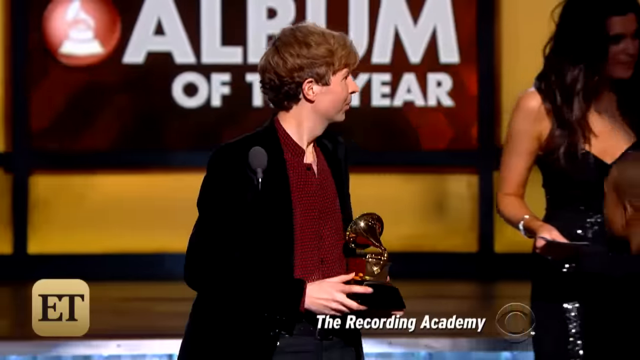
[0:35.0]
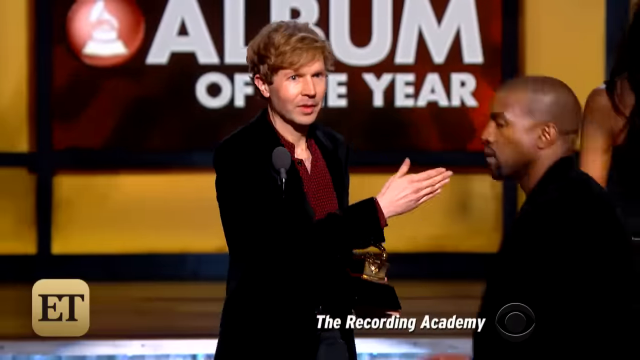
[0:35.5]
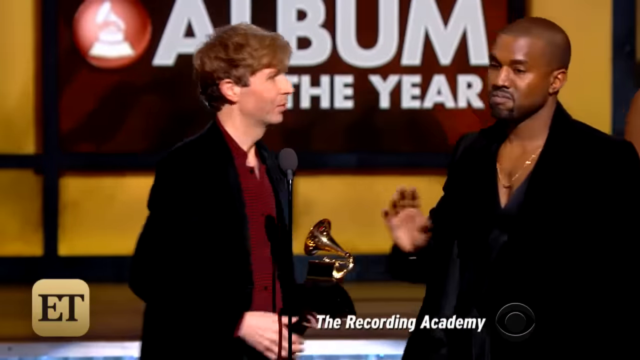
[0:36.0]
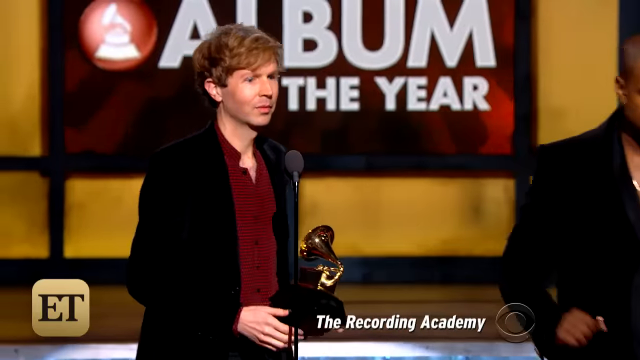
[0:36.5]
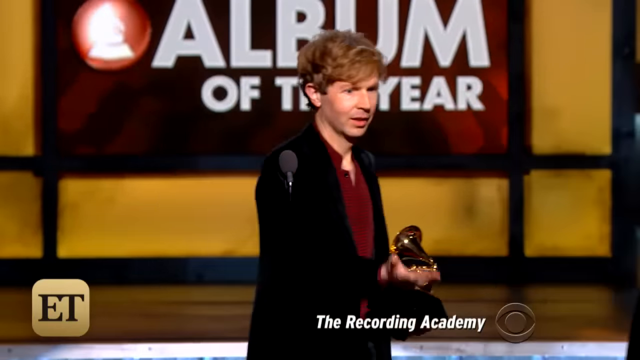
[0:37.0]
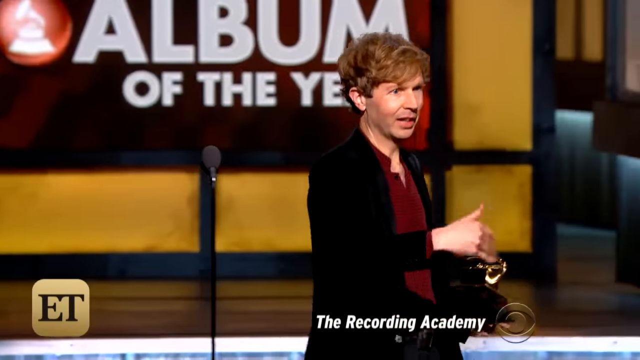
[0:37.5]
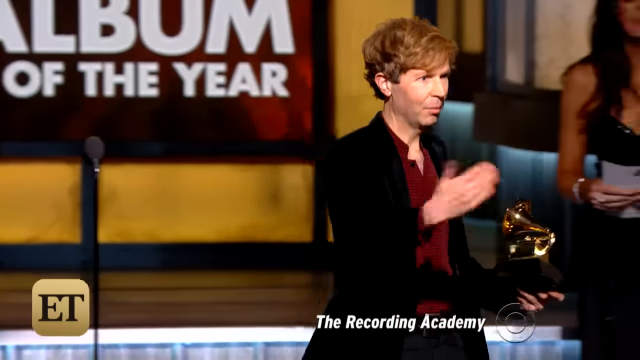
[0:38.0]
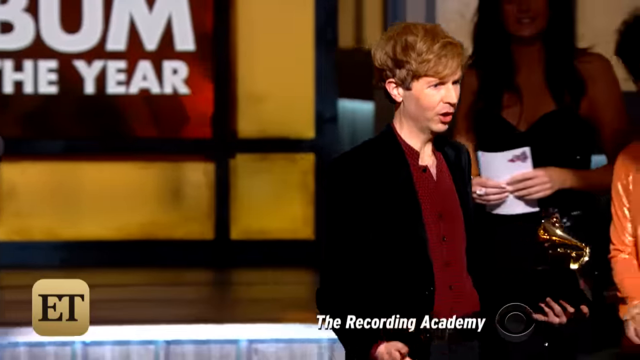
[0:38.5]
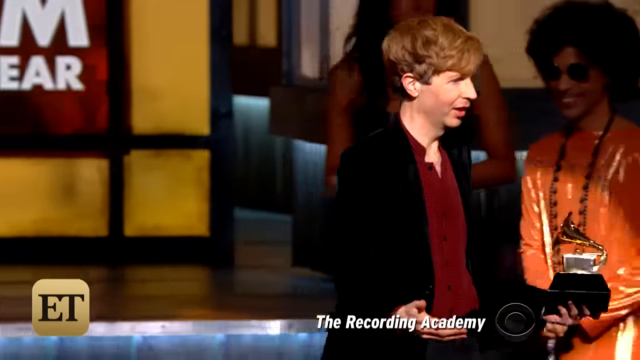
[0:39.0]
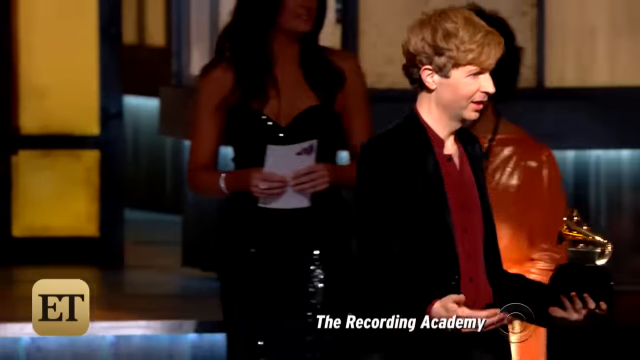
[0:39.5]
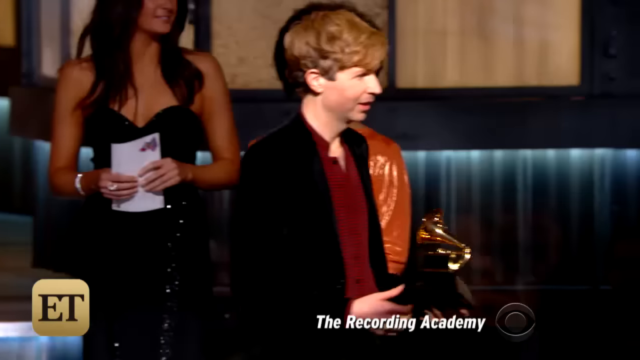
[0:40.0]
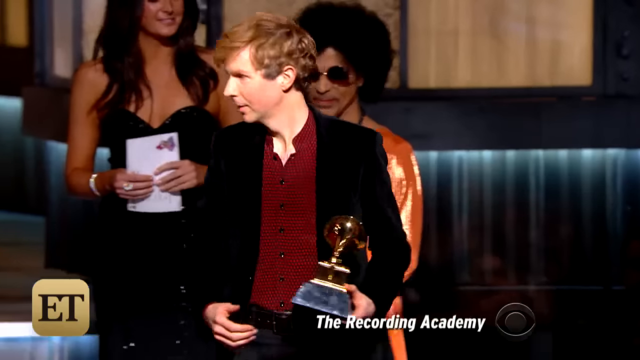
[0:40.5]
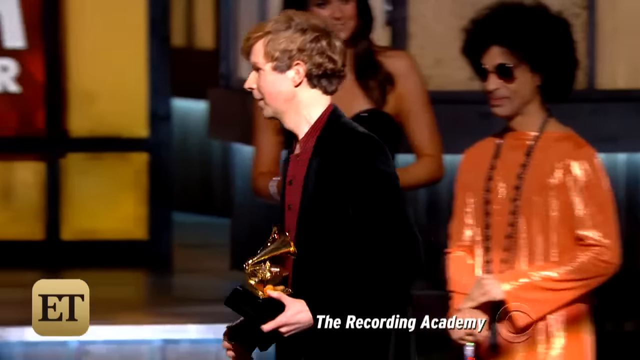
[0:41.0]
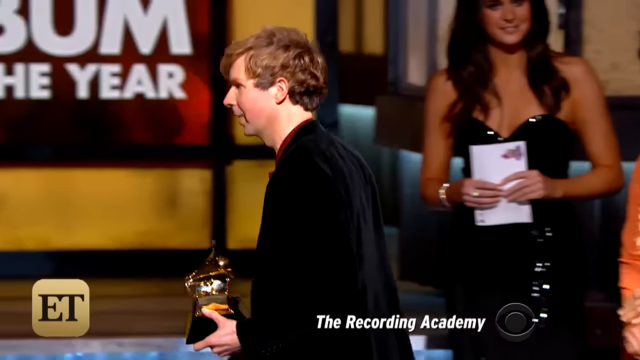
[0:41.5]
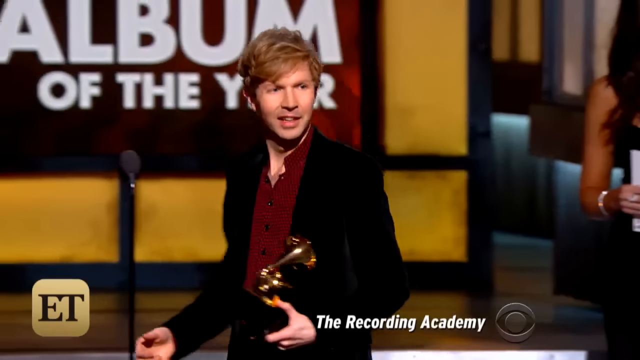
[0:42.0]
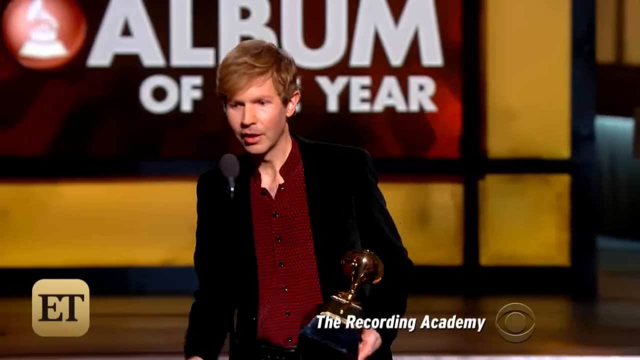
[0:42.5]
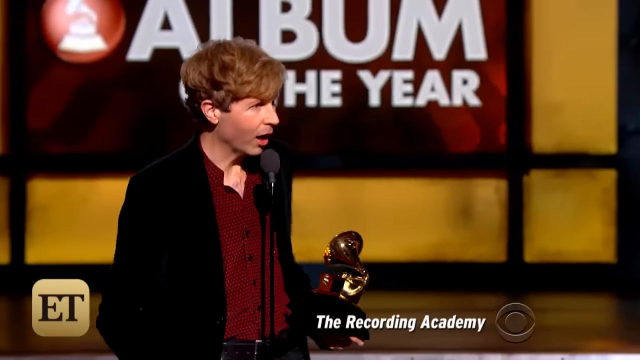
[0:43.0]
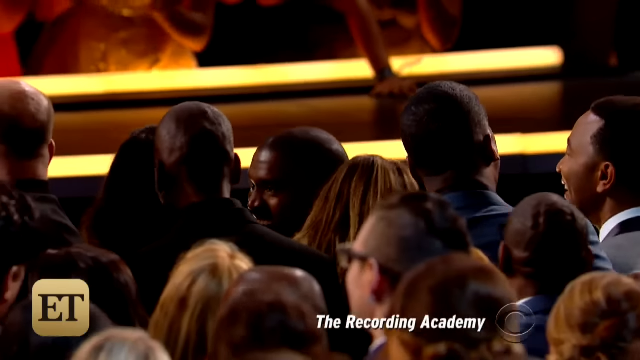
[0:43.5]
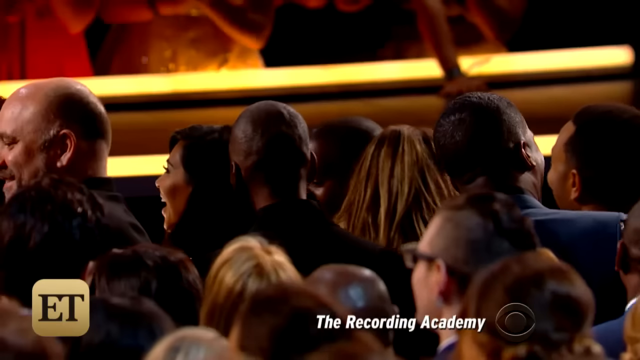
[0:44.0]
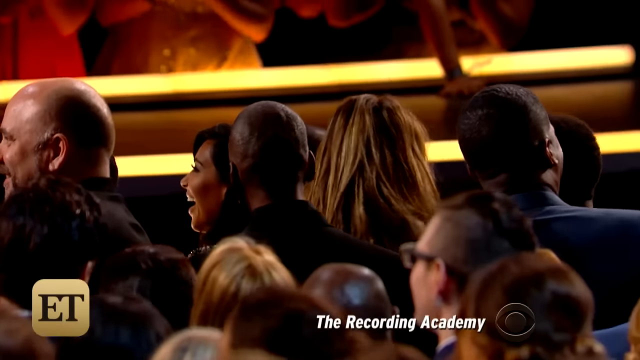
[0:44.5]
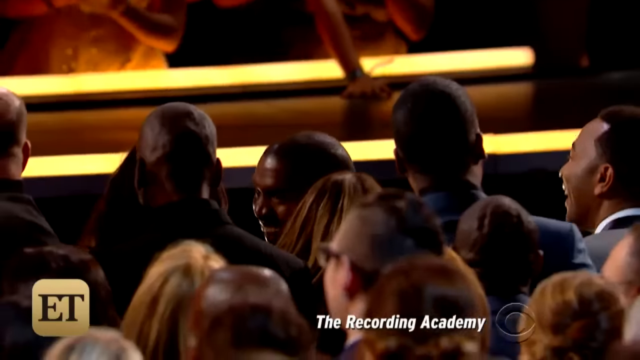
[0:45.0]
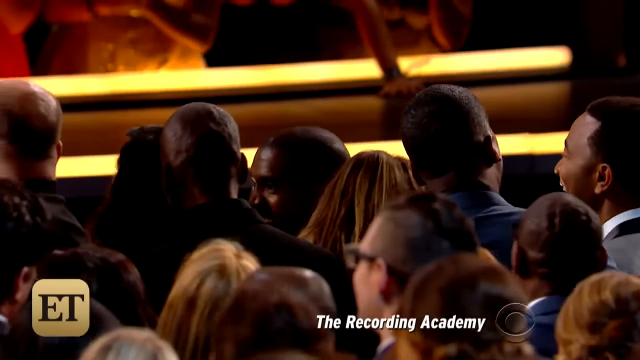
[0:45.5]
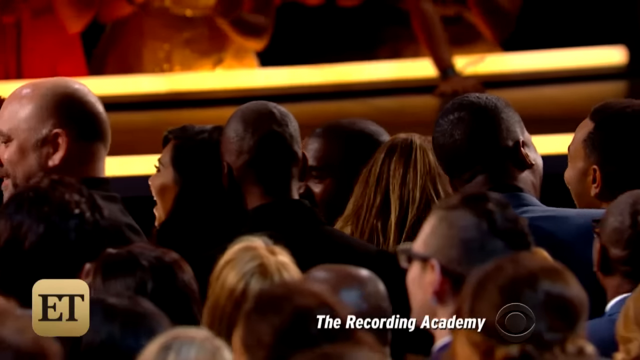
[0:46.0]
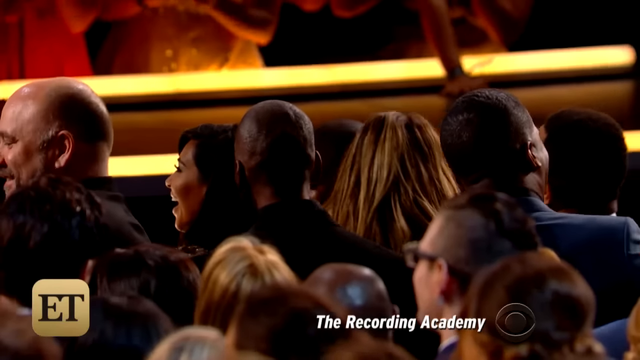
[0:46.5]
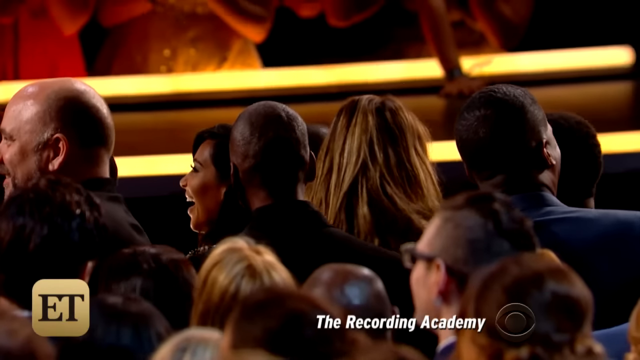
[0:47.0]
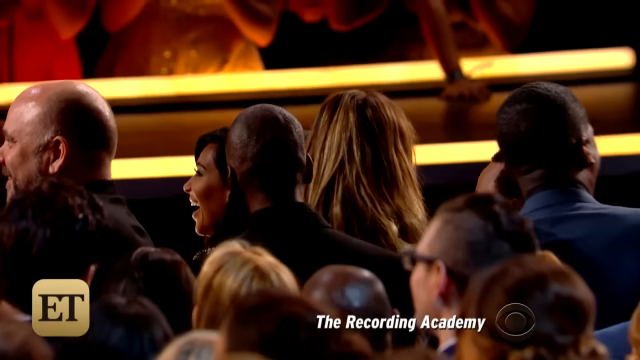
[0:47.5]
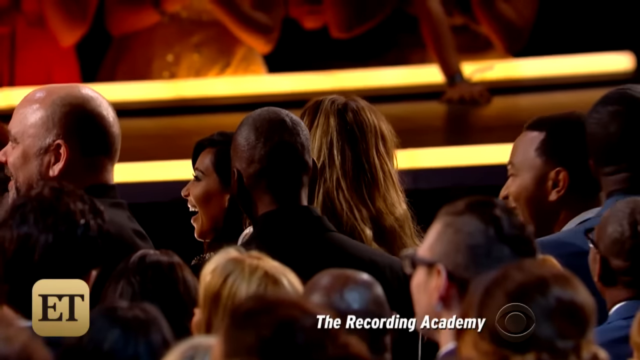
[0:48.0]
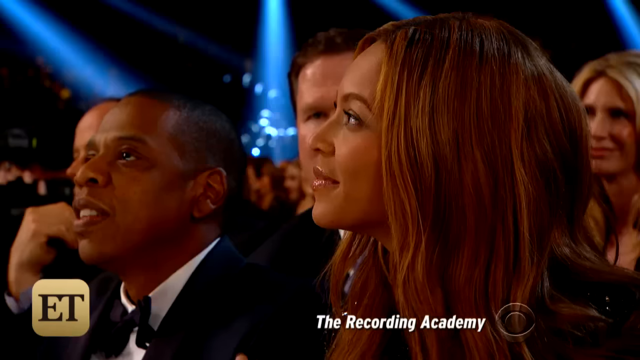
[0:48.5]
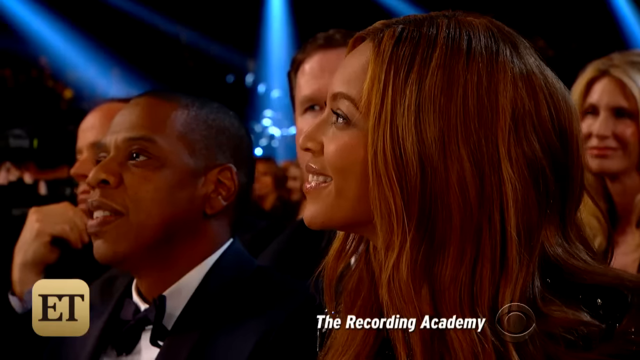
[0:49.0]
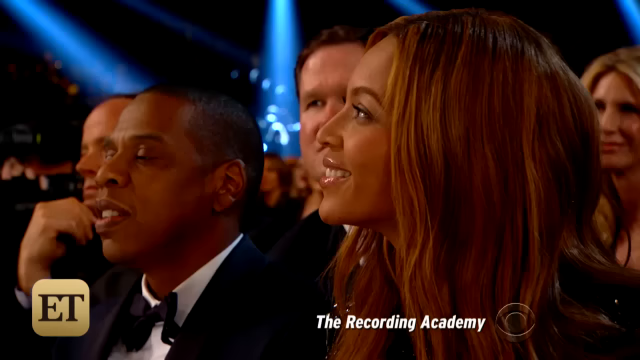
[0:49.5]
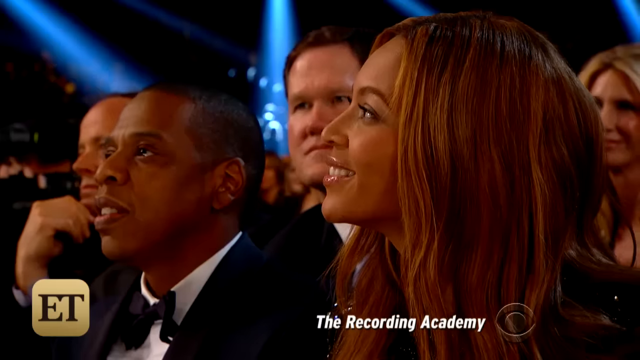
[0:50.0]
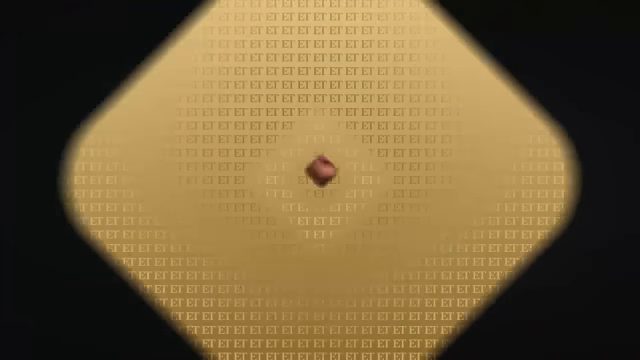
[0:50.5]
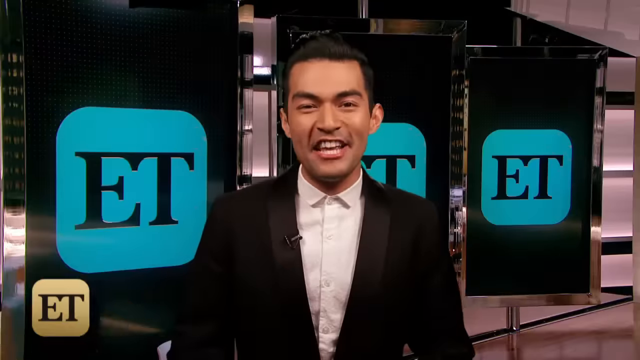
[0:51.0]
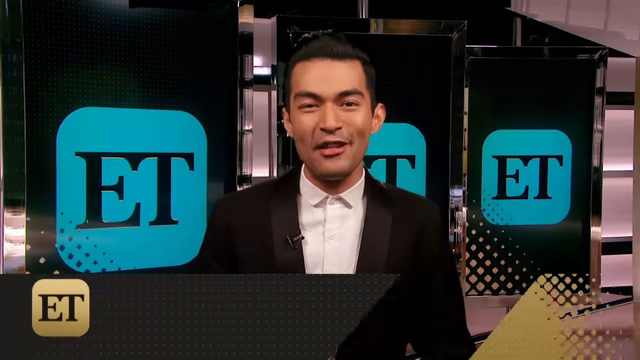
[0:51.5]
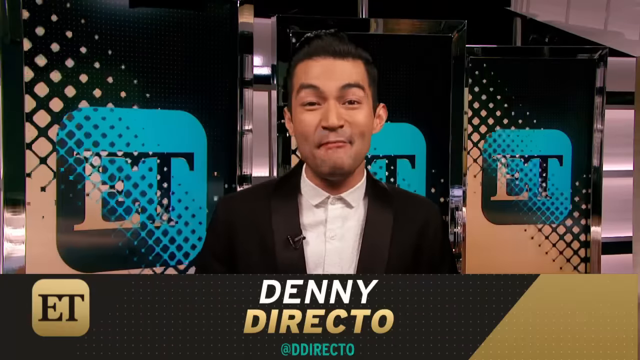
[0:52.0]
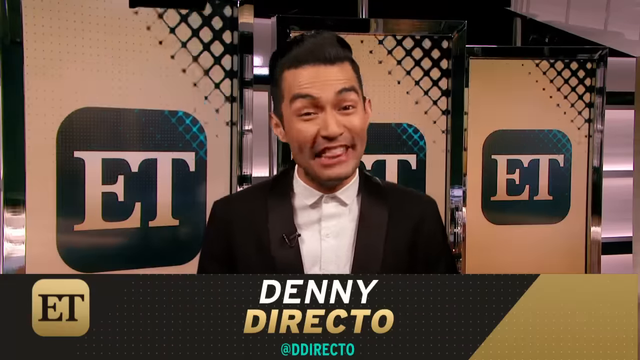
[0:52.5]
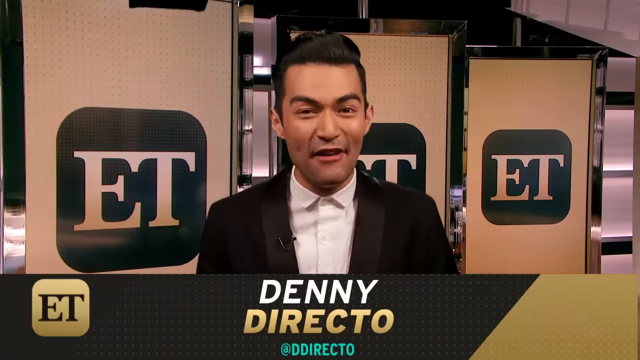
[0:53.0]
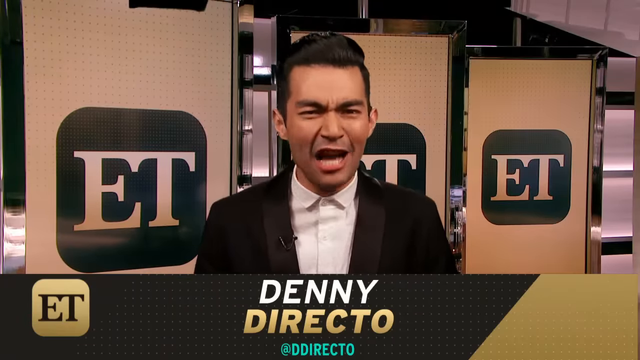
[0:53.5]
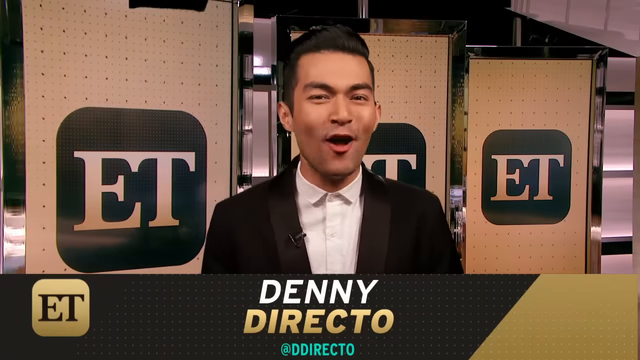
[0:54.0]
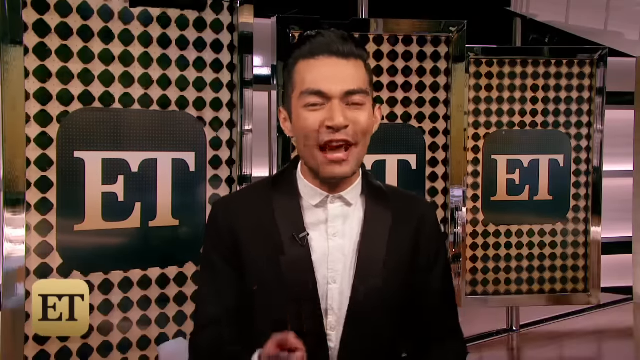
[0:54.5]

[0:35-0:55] Kanye interrupts someone who has won an award. He is calling some people up on stage, and he goes back to the mic. A shot of the audience shows several people, and then the video flips to Jay-Z and Beyonce. Danny, a reporter, is shown. The video flips back to Kanye interrupting someone who has just won an award, and he goes to the mic as if saying something. The audience is shown smiling, laughing and surprised, followed by Beyonce and Jay-Z. Danny, the reporter, says something for E.T. The video goes back to Kanye with someone on stage who has just won an award, then flips to the audience, seemingly laughing or surprised. An E.T. announcer appears on the screen saying something, and then someone who has just won is shown.